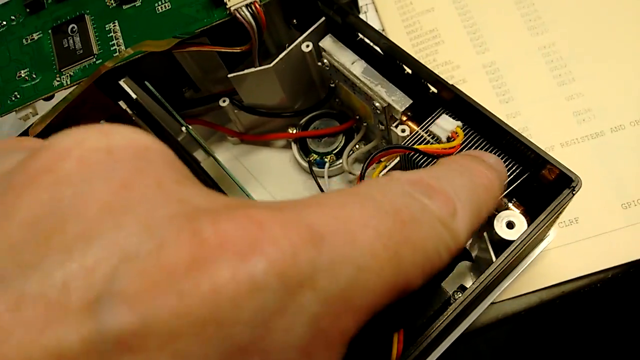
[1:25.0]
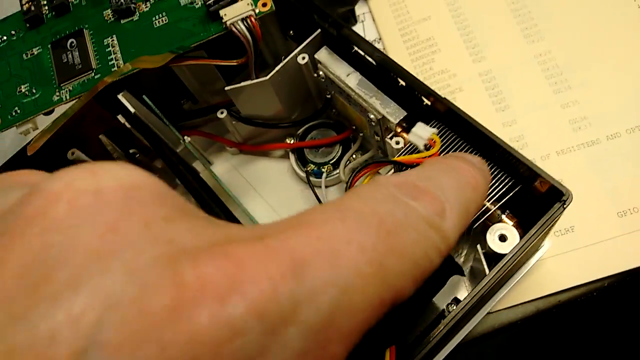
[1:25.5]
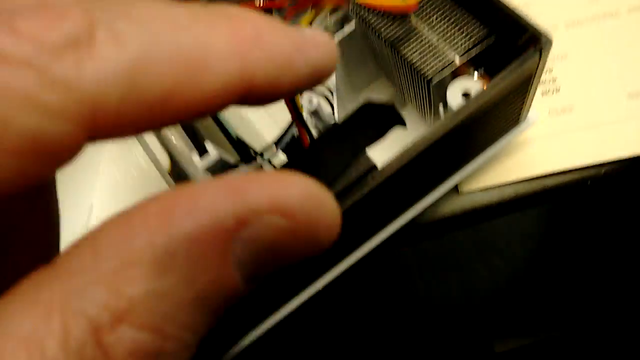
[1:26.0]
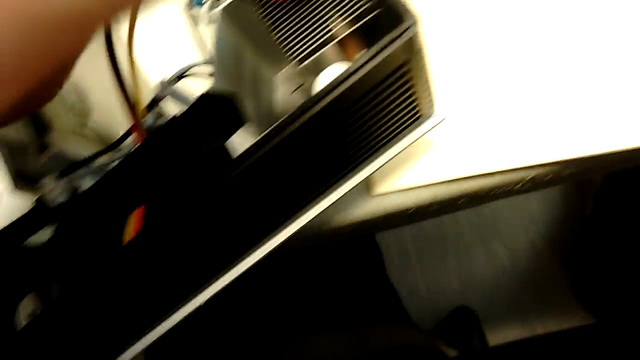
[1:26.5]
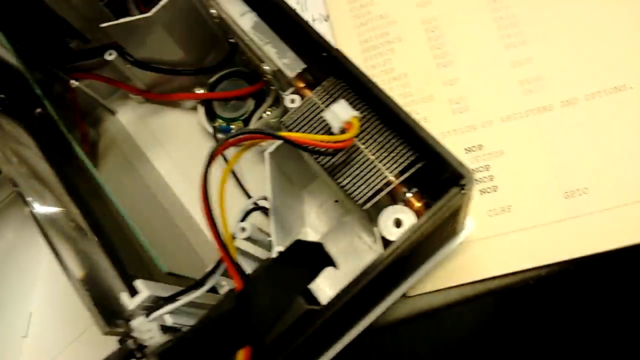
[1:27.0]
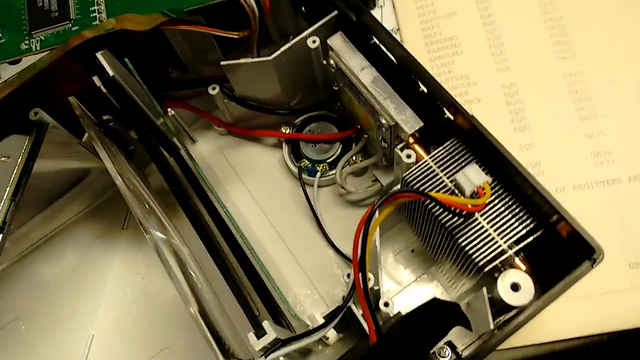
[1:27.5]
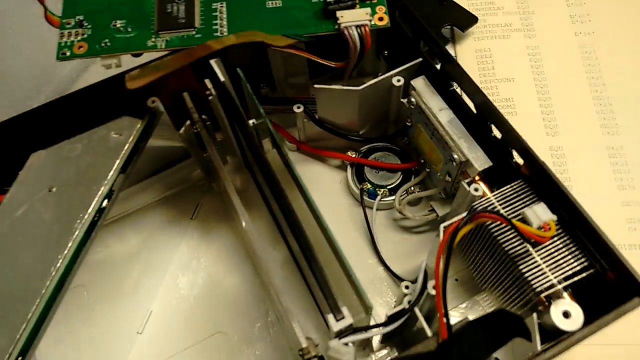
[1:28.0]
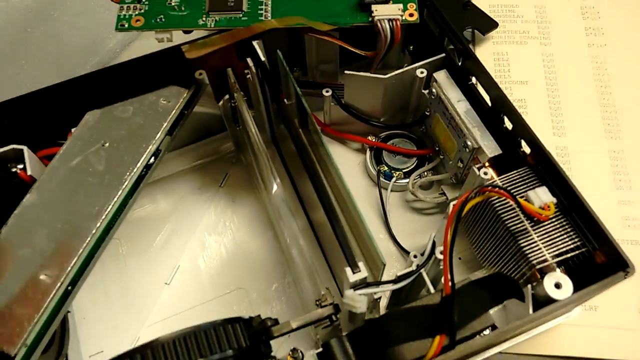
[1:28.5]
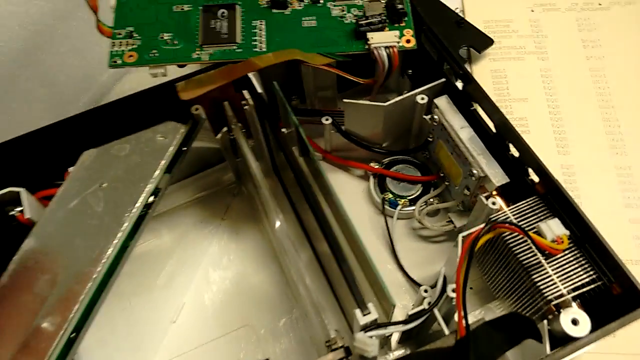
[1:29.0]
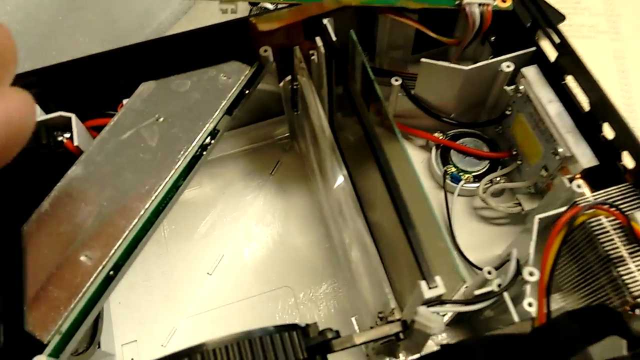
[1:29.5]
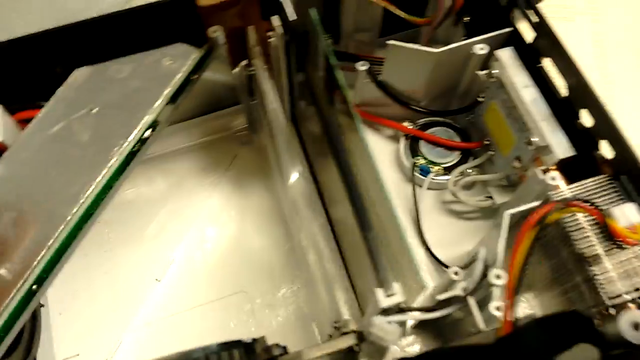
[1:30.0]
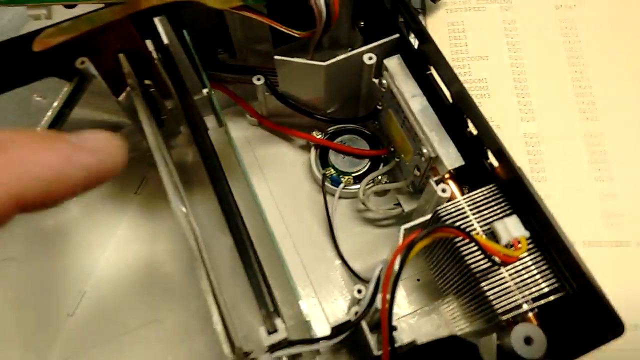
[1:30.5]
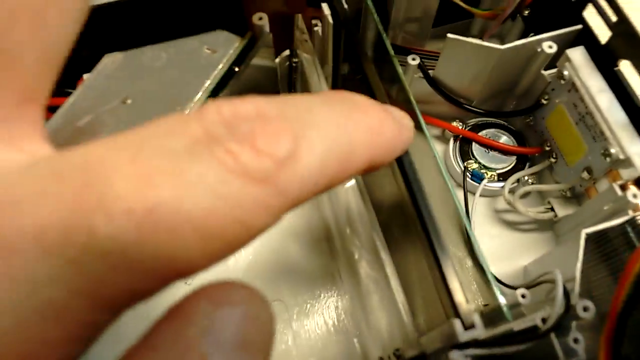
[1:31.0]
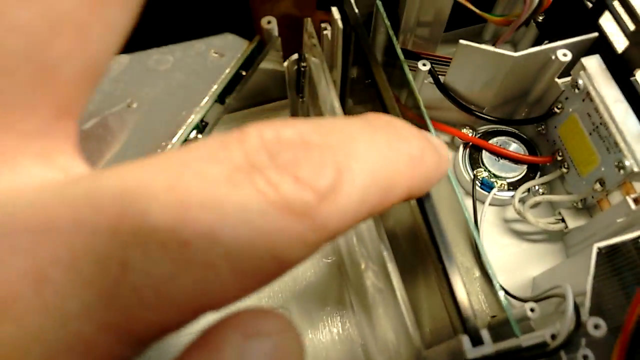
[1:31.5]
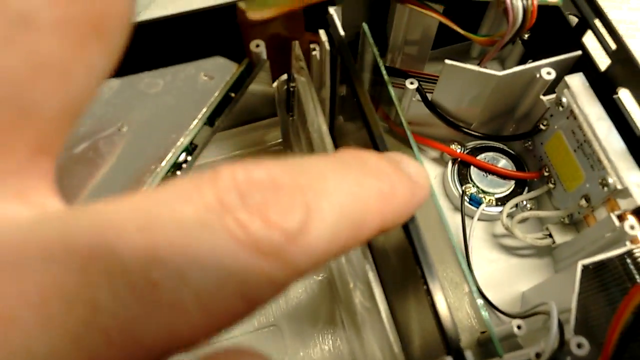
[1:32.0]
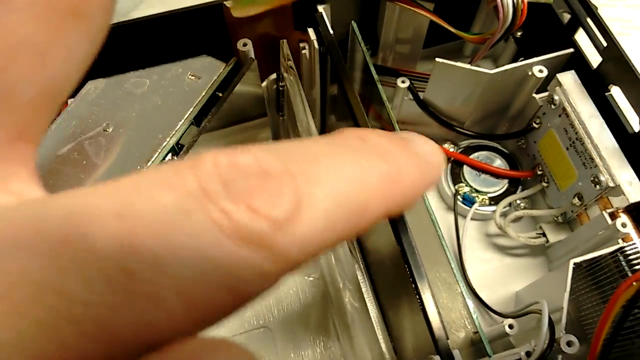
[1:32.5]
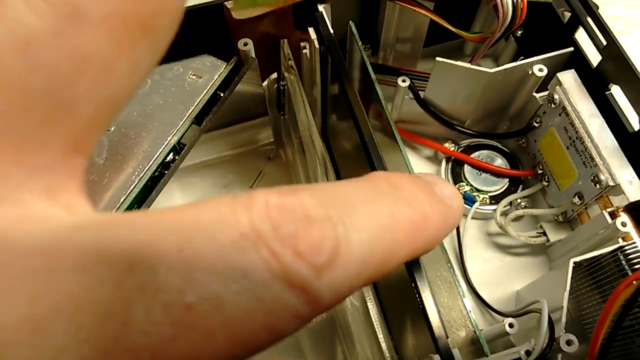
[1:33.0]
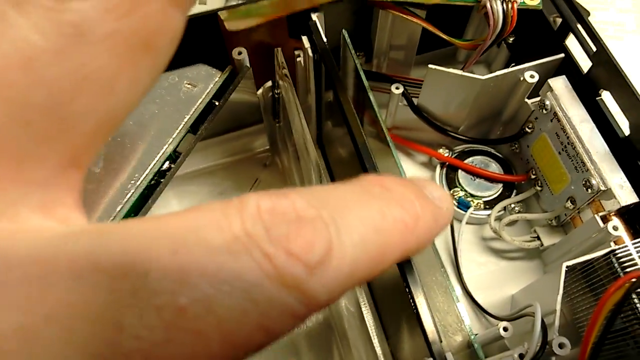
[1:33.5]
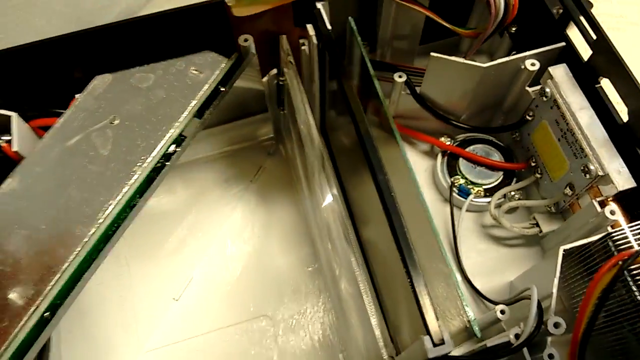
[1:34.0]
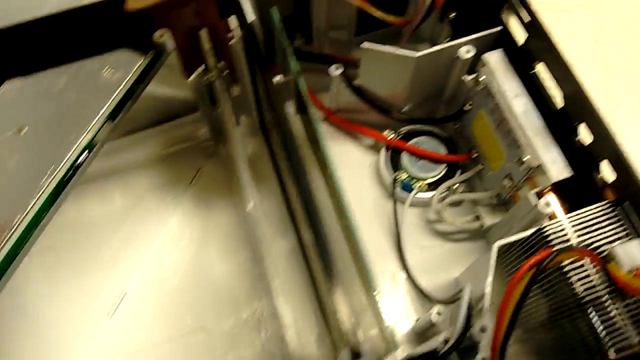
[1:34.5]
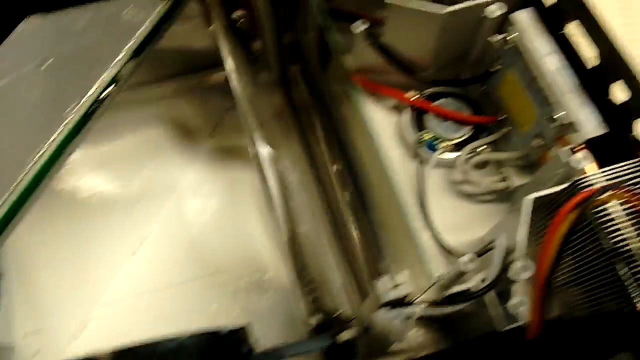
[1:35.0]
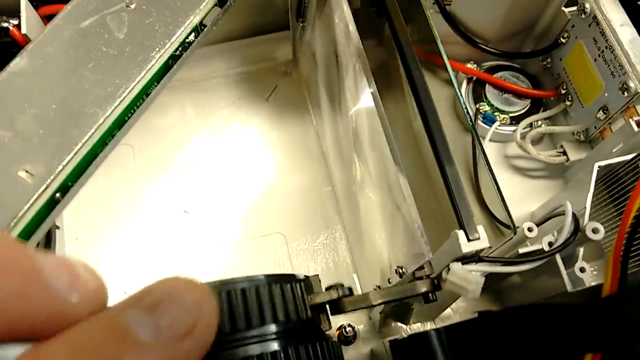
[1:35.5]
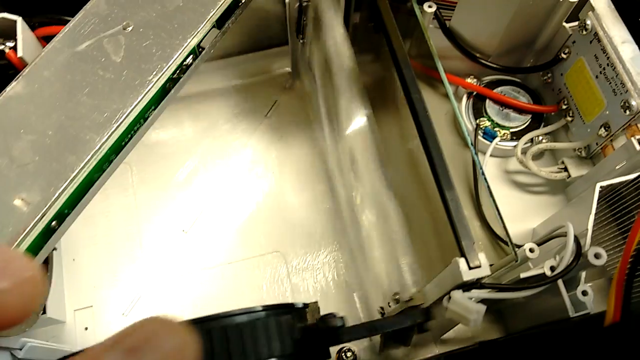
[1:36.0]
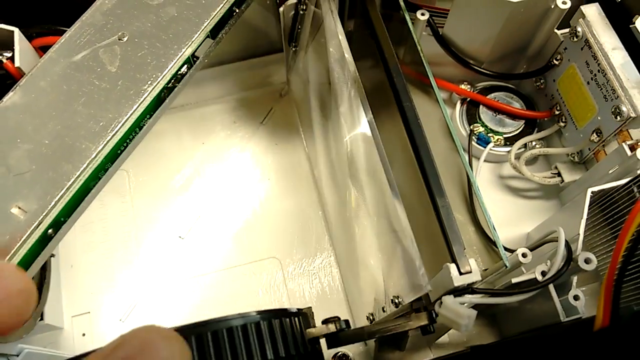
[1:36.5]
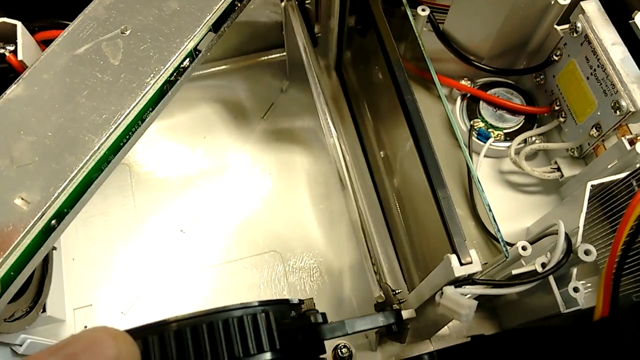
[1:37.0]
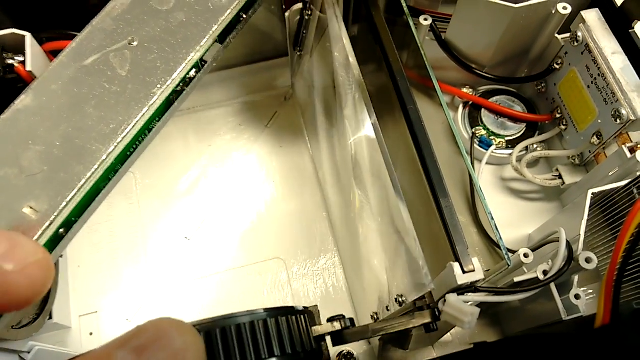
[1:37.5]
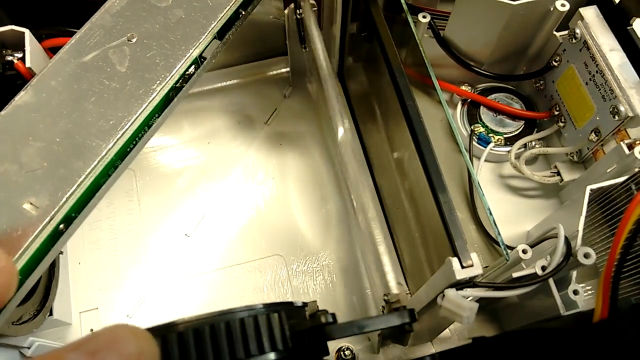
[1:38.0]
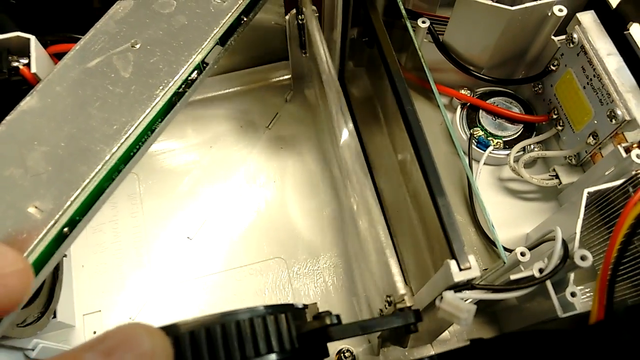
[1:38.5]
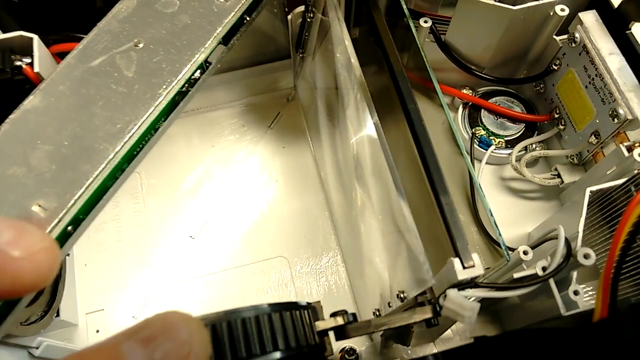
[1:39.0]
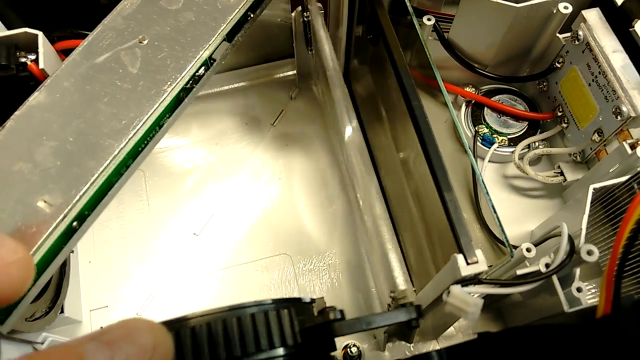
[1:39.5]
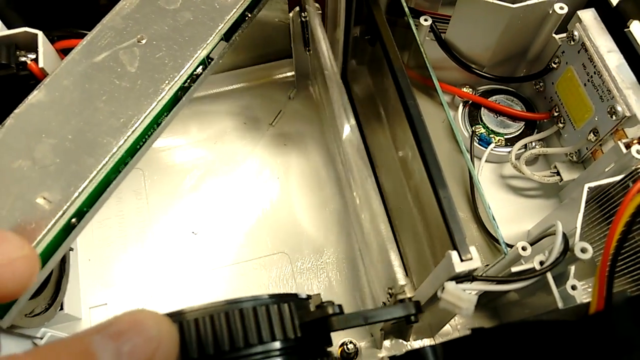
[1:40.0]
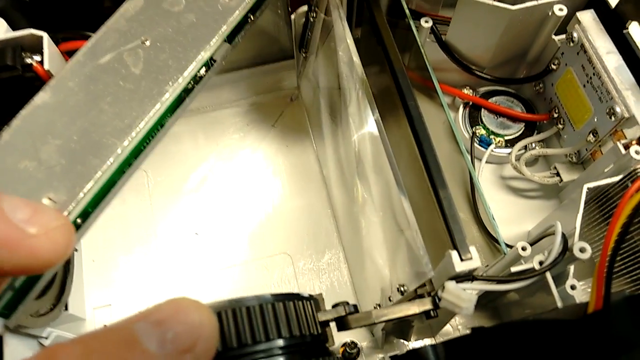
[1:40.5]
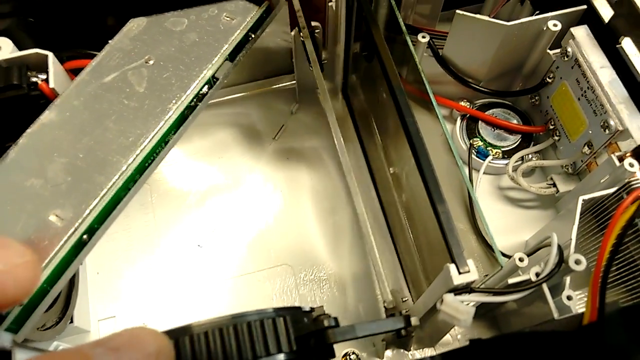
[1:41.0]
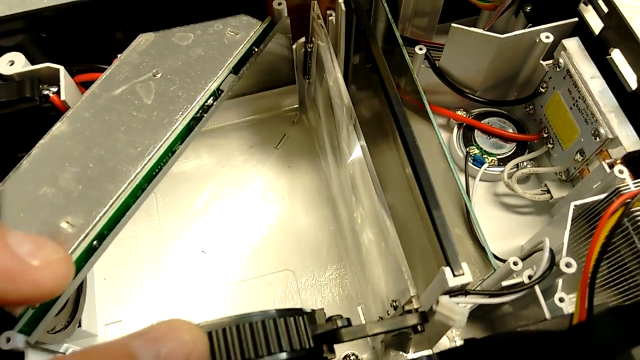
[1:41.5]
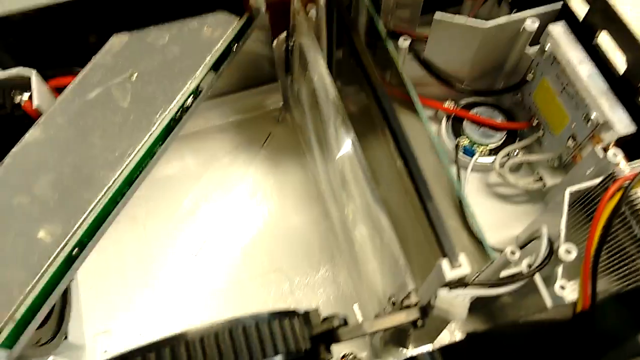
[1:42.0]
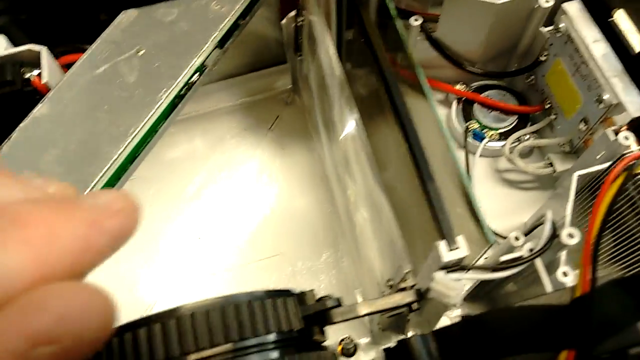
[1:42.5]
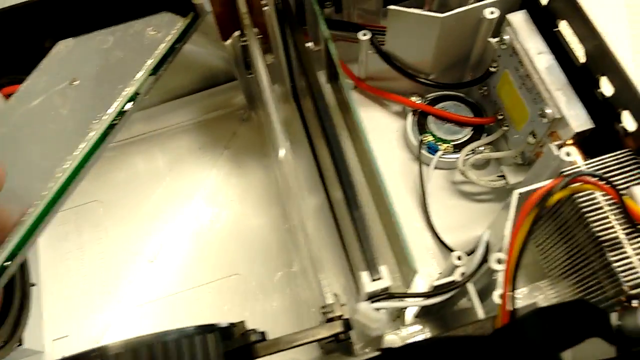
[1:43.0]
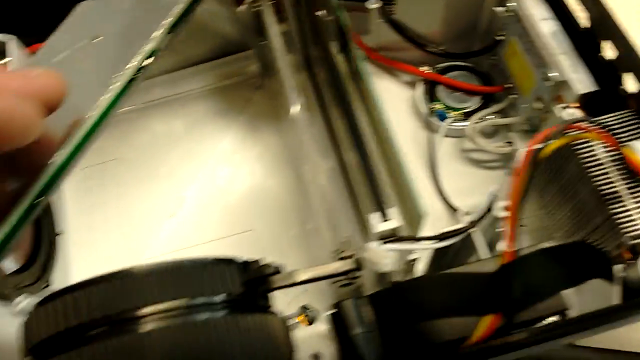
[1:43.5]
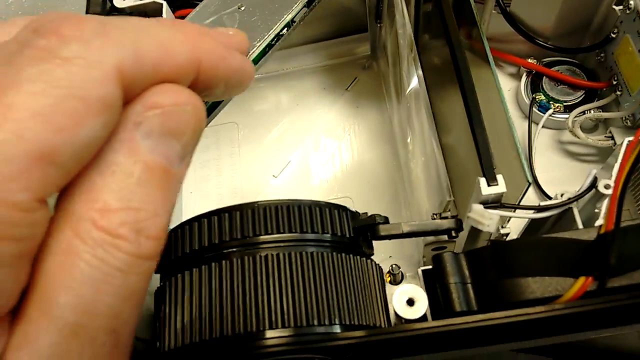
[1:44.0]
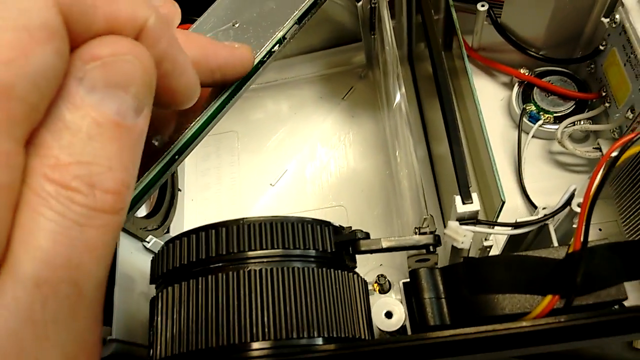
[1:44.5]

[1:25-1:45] A white Caucasian male's hand shows the inner workings of the inexpensive LED projector. He moves from the right-hand side to the middle of the machine, showing what looks like the mirror or reflector glass. He repeatedly moves the lens left, right, left, right, left, right, showing the movable parts inside the machine.